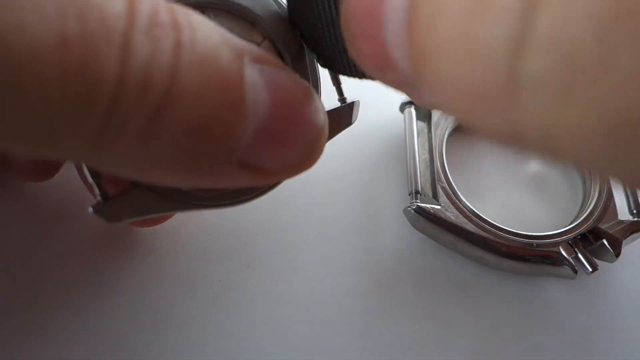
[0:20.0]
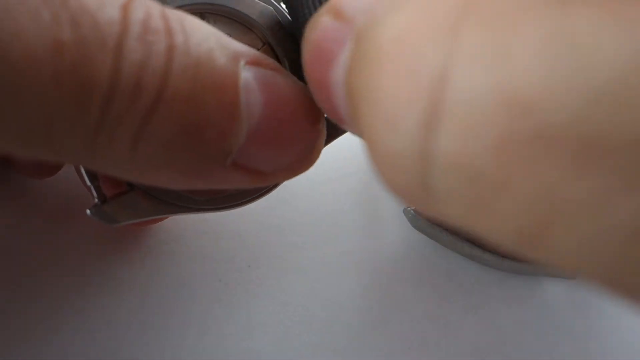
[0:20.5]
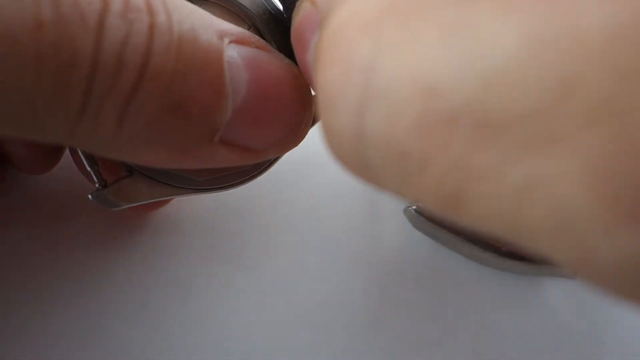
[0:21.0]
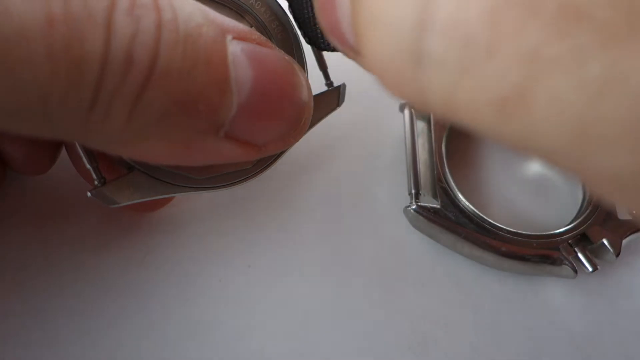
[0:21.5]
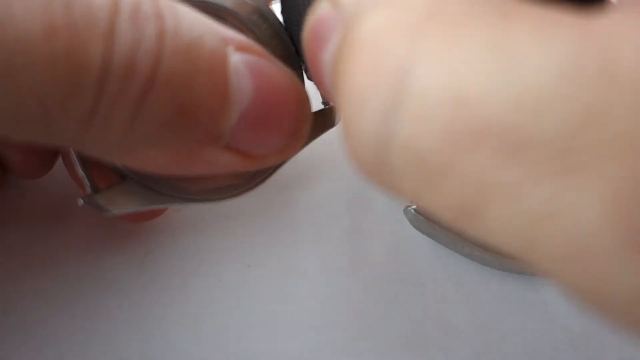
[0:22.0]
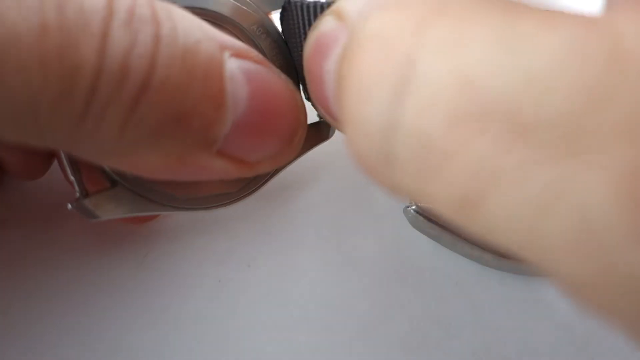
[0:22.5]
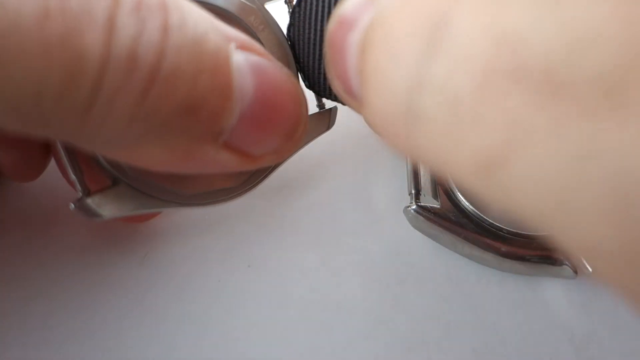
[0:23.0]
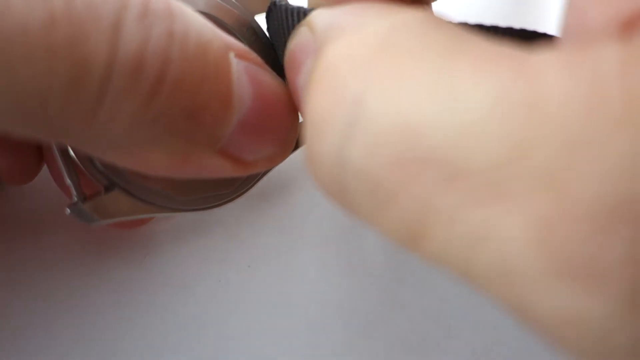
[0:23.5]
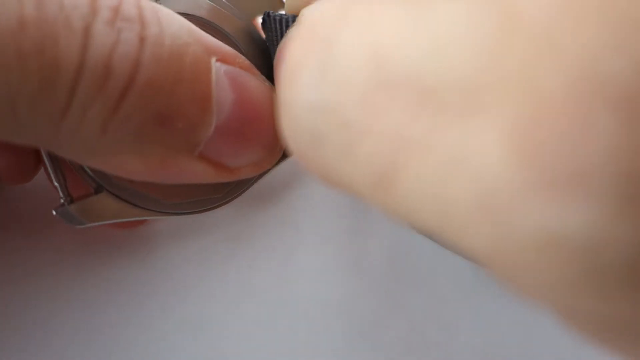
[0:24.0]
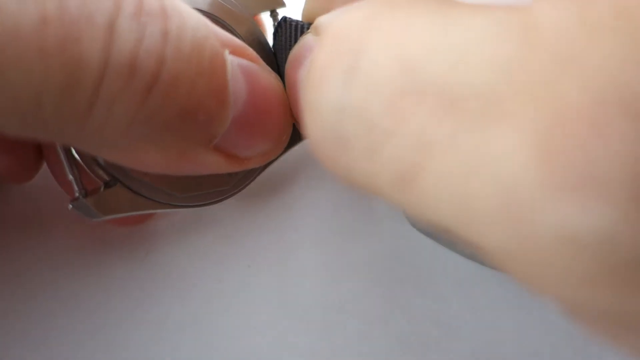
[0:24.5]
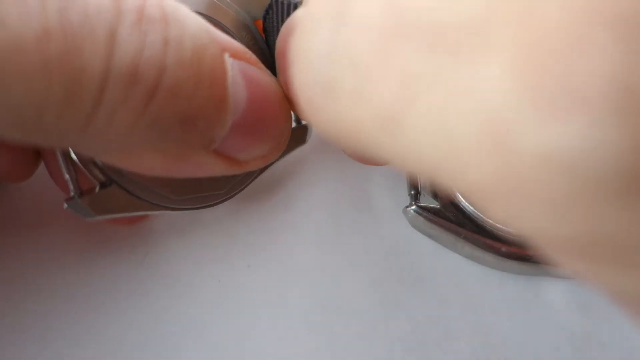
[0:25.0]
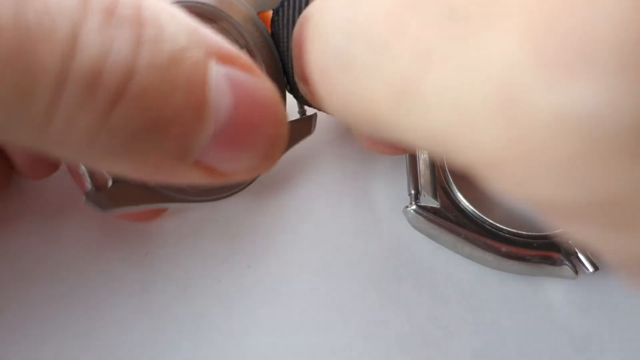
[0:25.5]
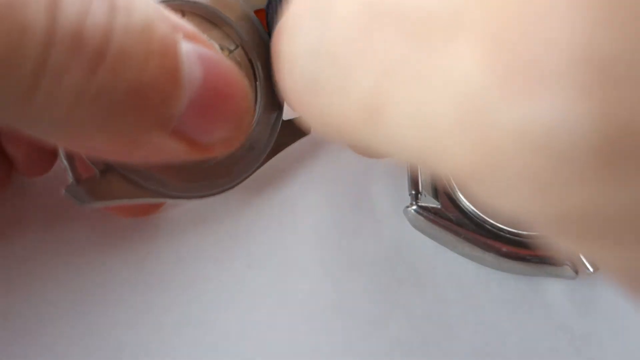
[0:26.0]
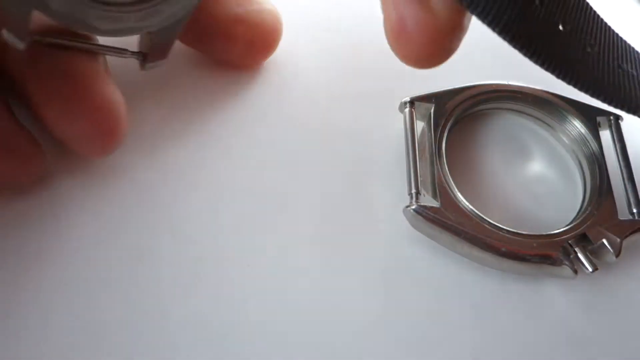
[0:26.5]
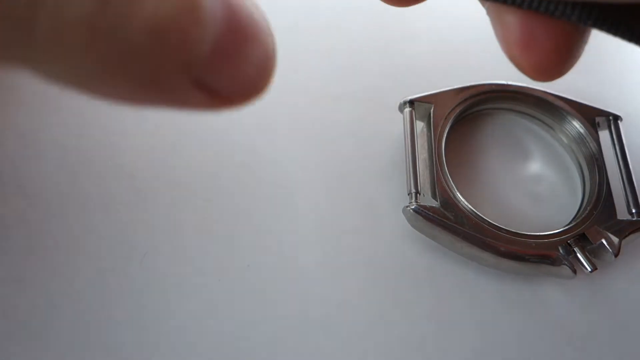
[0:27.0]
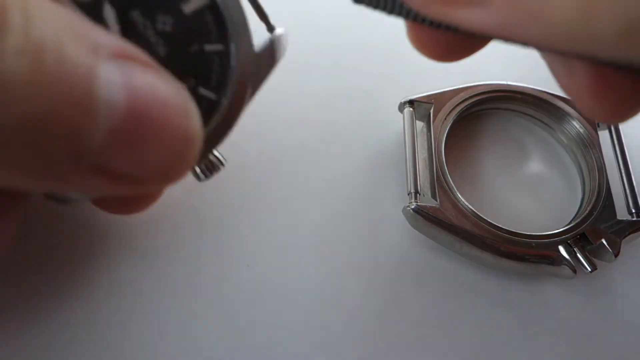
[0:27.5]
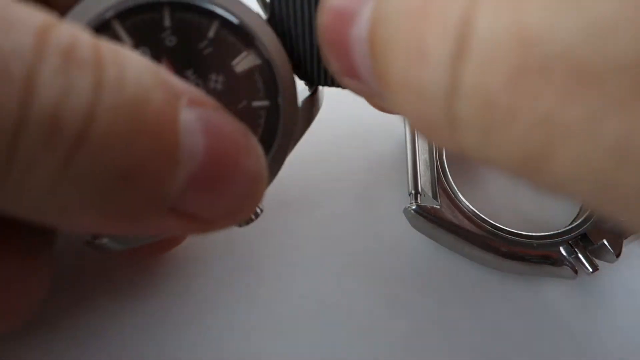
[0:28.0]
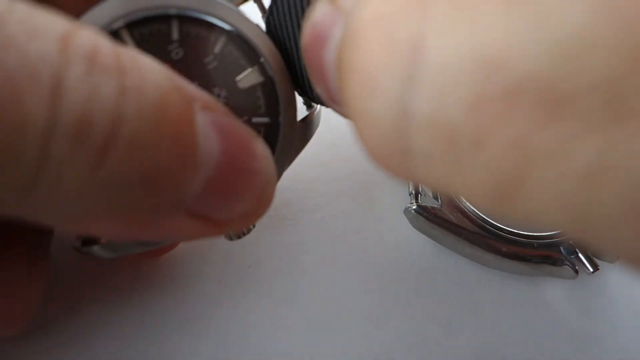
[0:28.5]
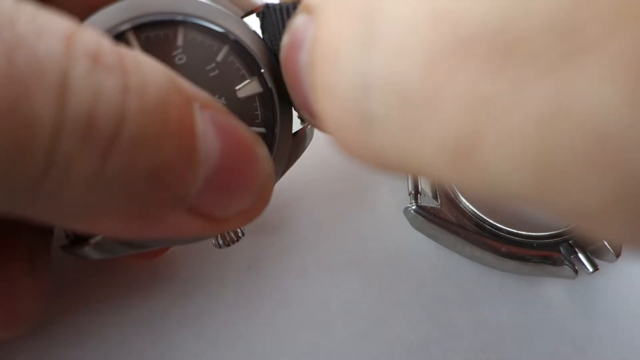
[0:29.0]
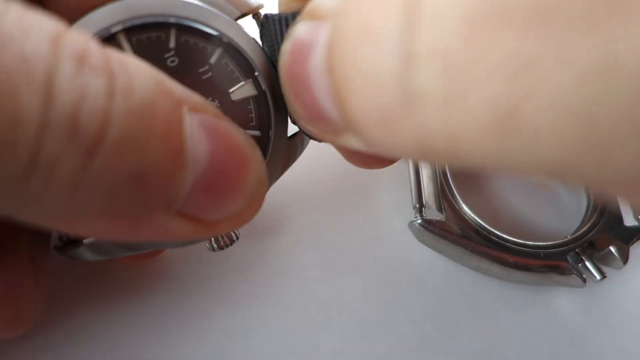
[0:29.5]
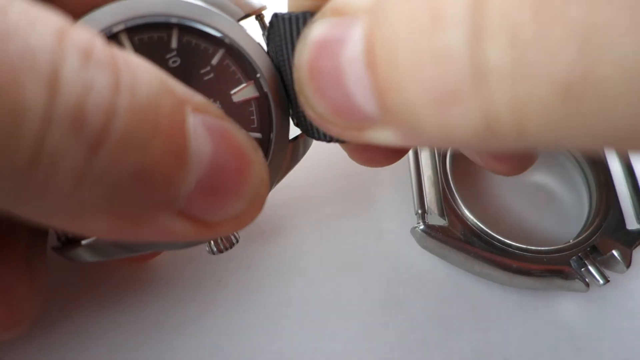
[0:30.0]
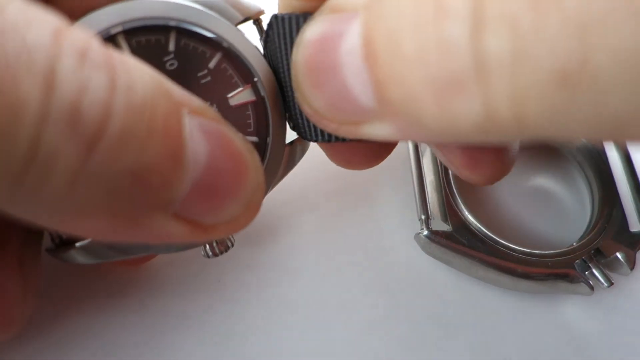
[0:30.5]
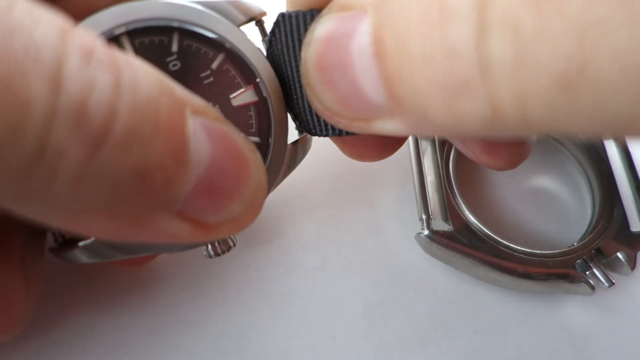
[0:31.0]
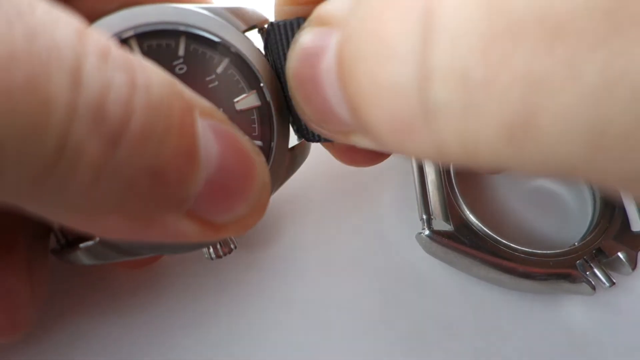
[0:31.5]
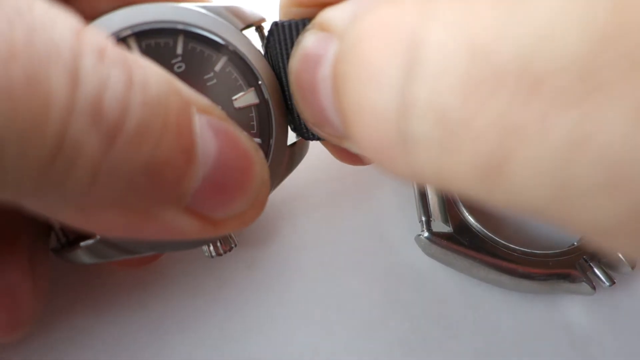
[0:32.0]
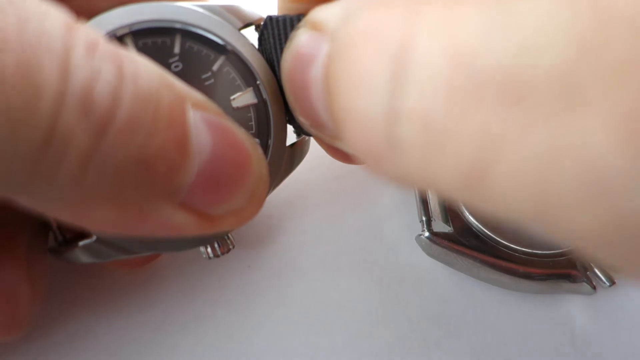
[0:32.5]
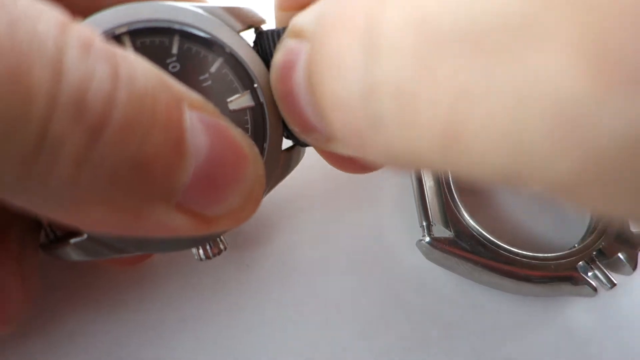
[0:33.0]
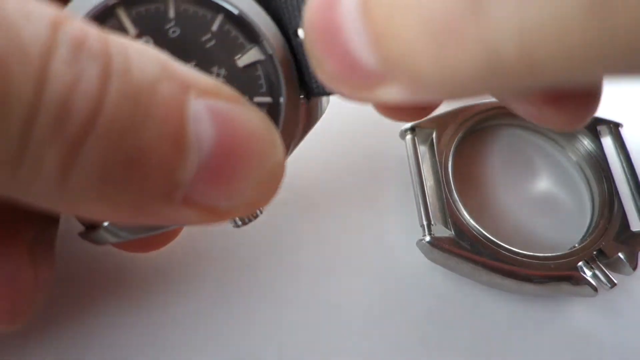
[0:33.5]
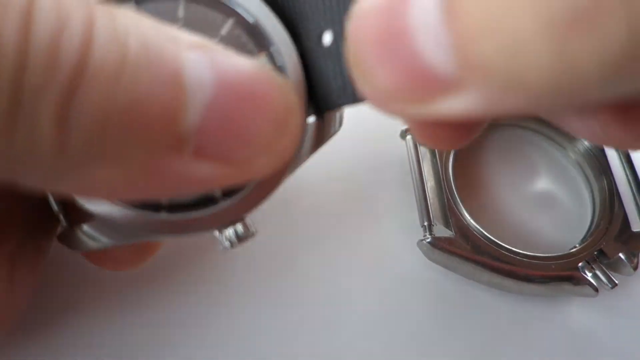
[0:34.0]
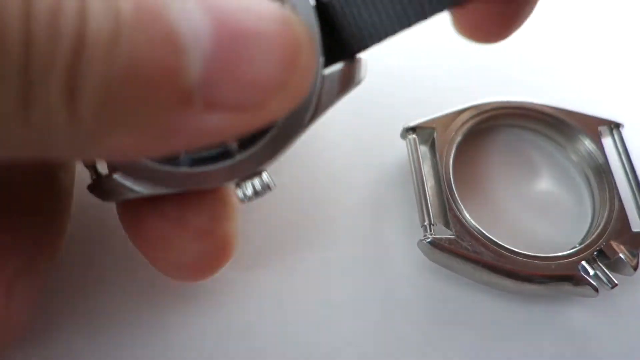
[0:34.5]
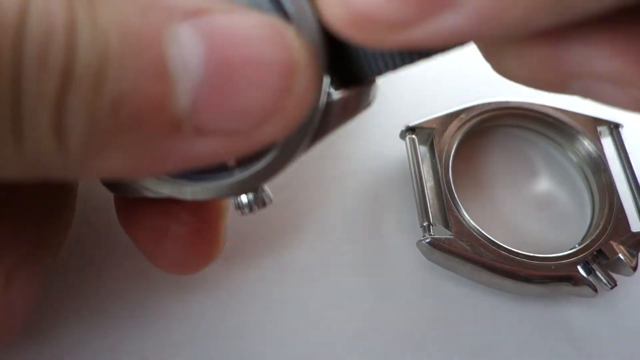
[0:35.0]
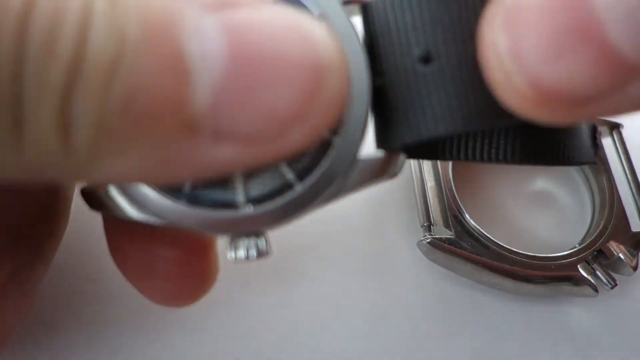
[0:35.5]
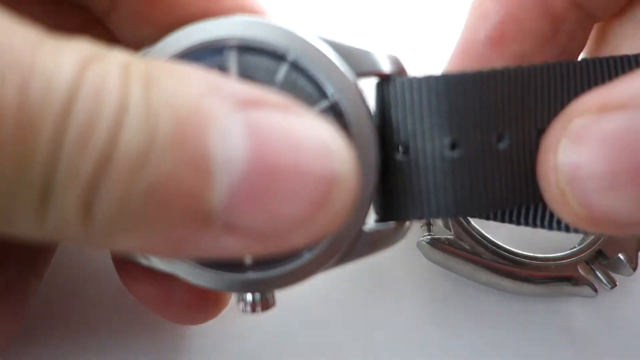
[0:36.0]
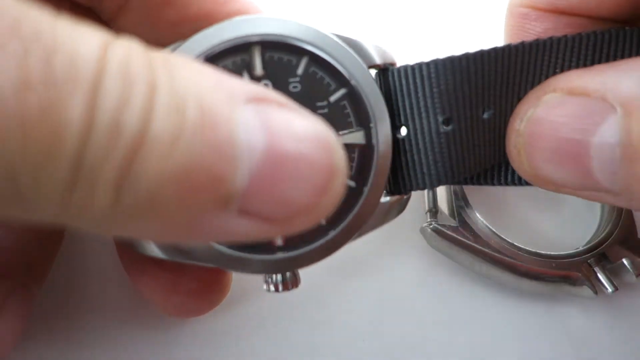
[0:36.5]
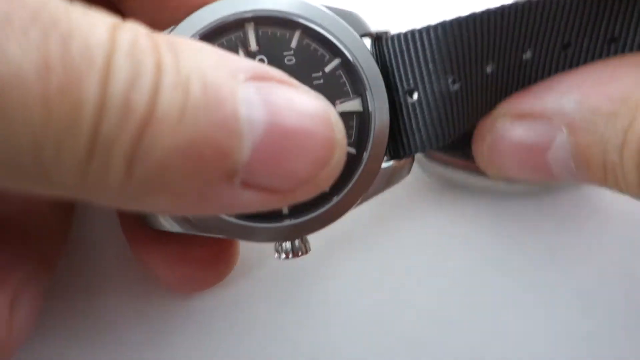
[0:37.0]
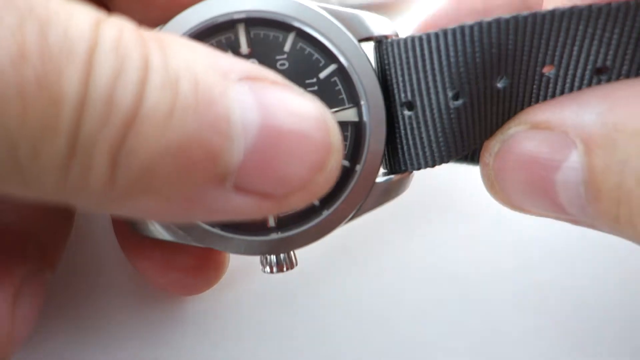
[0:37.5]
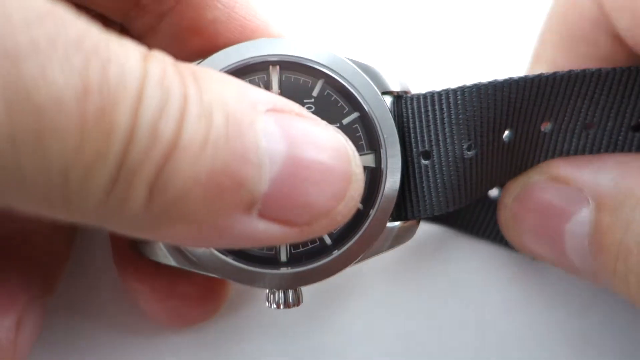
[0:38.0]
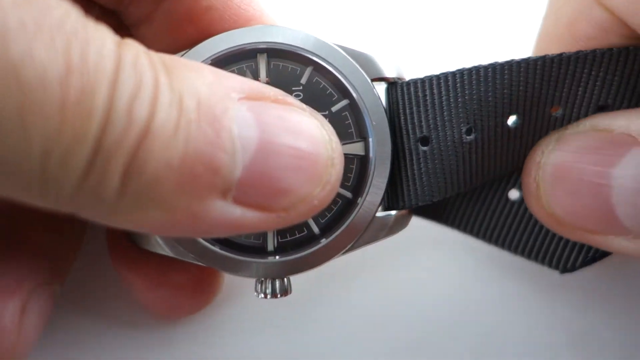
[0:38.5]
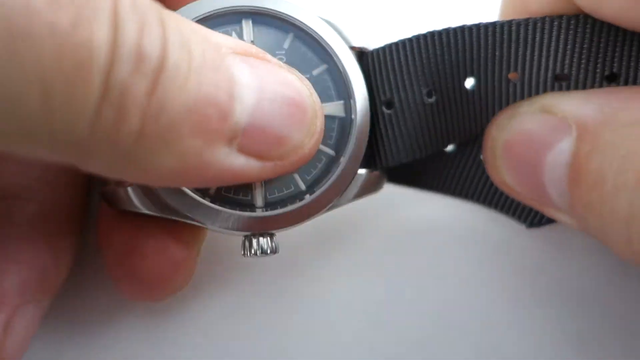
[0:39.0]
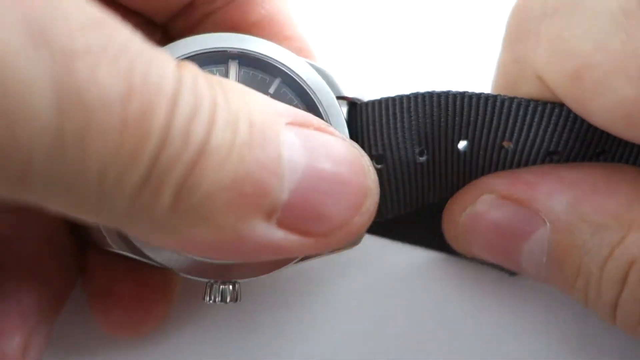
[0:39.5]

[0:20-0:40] The view shows the section where the watch strap links to the face. A very thin bar with a gap in the middle is attached to the watch strap. The watch strap on the right-hand side is placed through this link on the left, and the person's fingers try to push the strap through the gap. Their thumbs touch in the center top section of the screen. They wiggle the strap around and manage to push it through, then use a finger and thumb to keep pushing further down the strap to get it through the gap, while holding the left-hand piece with a finger and thumb. A horizontal view then shows the watch face on the left-hand side of the screen with the watch strap now linked through the watch section. The face of the watch is black, and the number 10 is visible.